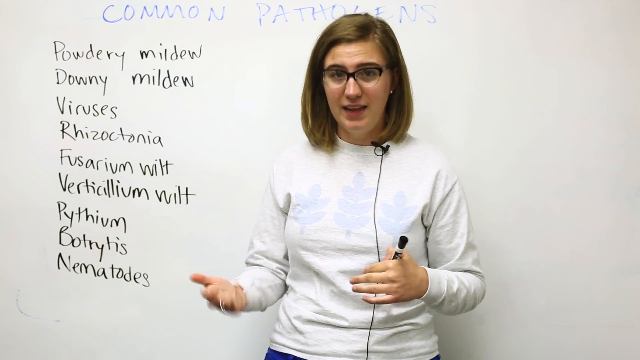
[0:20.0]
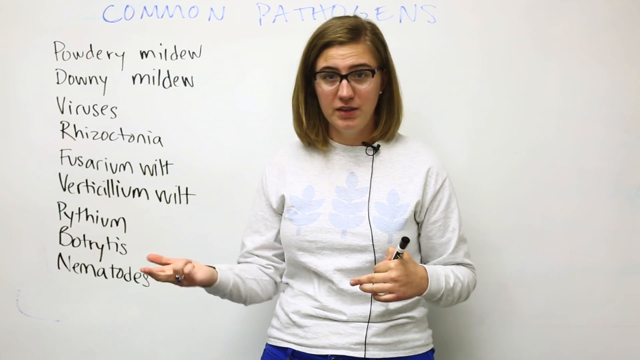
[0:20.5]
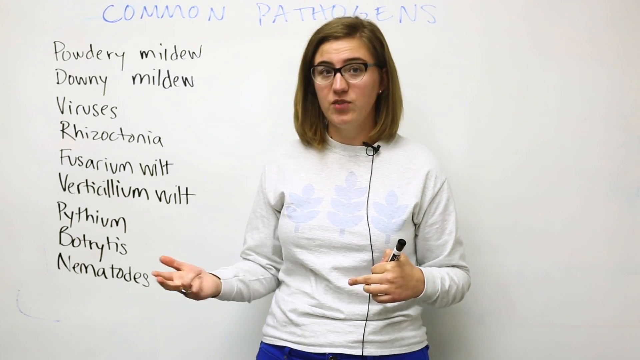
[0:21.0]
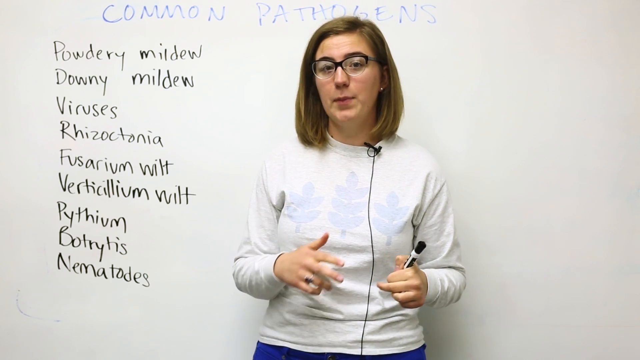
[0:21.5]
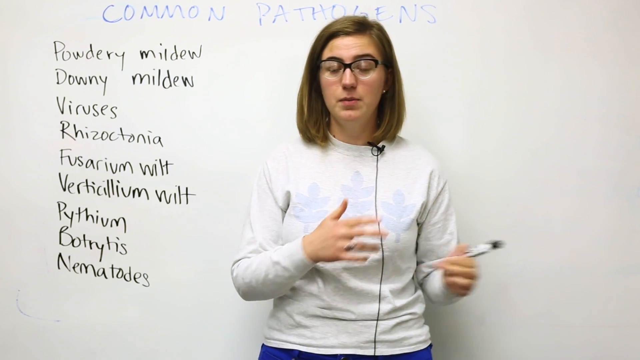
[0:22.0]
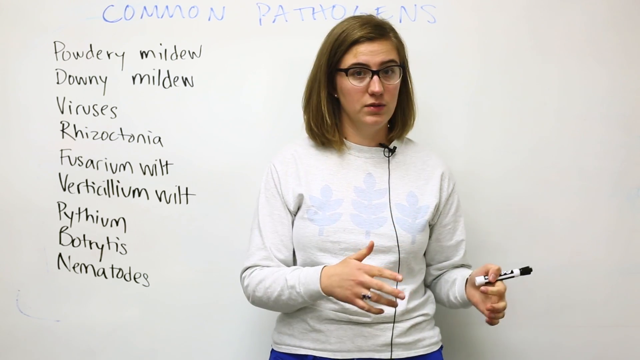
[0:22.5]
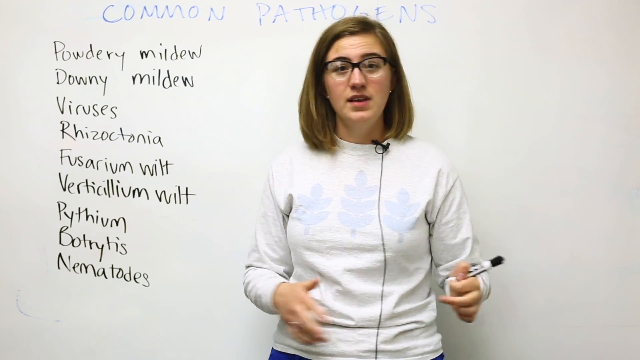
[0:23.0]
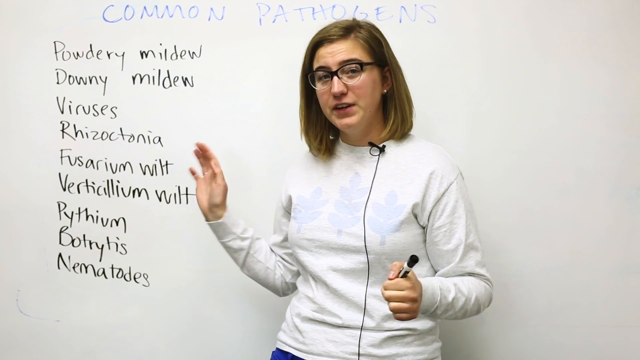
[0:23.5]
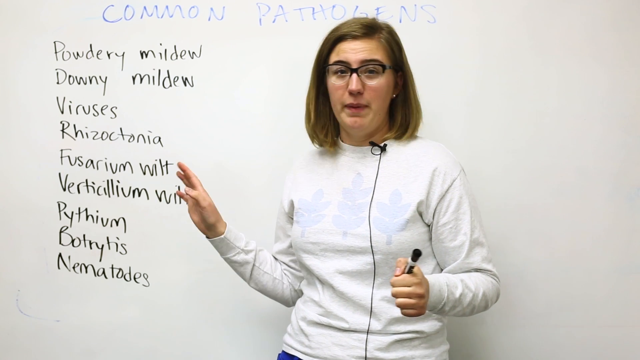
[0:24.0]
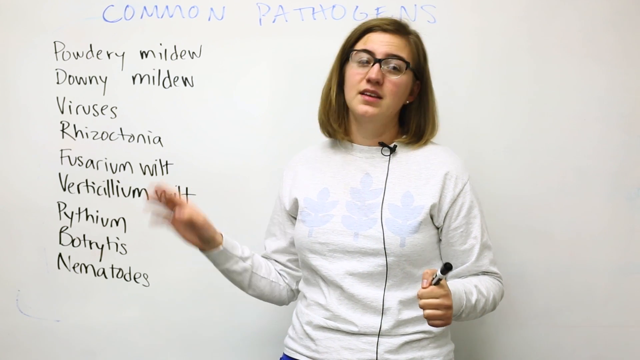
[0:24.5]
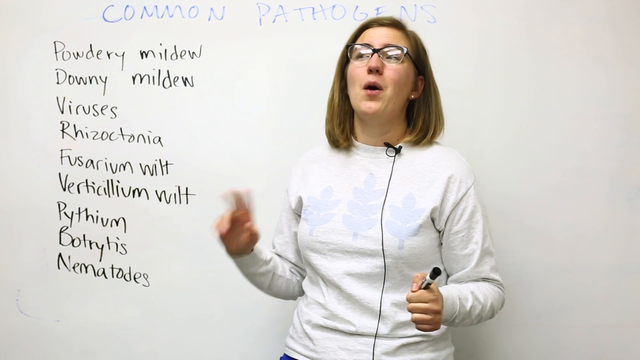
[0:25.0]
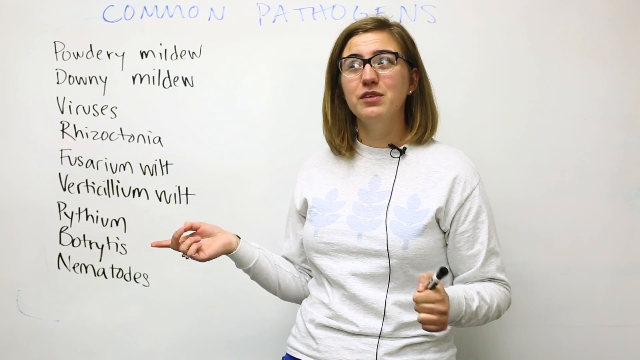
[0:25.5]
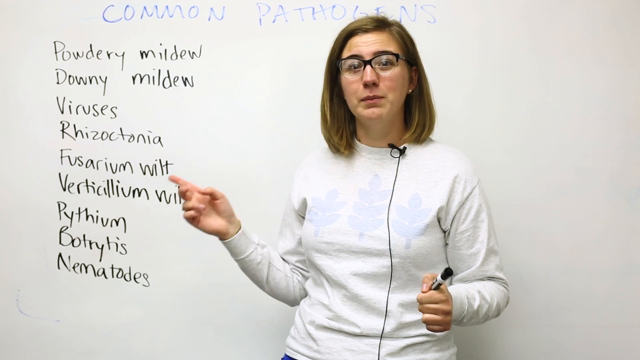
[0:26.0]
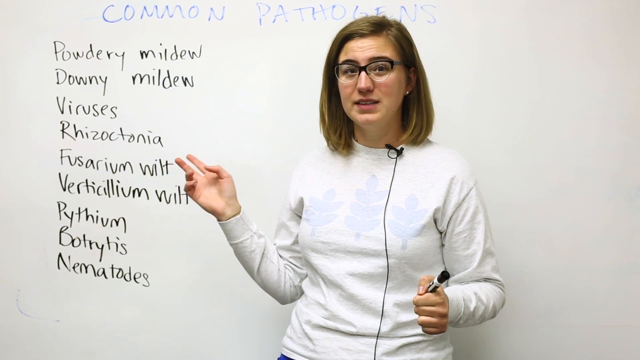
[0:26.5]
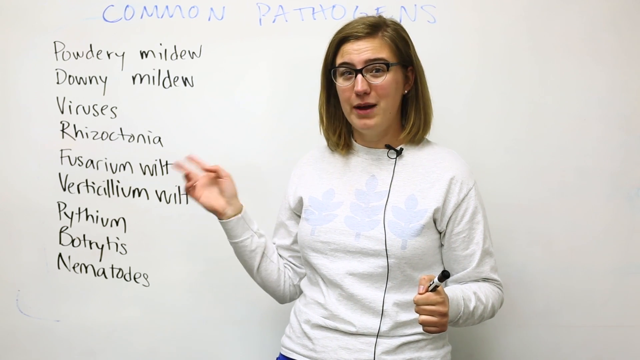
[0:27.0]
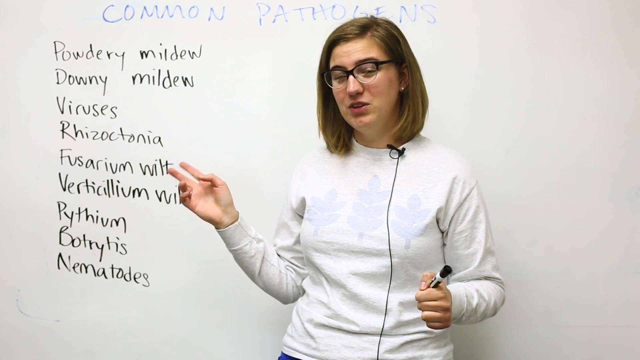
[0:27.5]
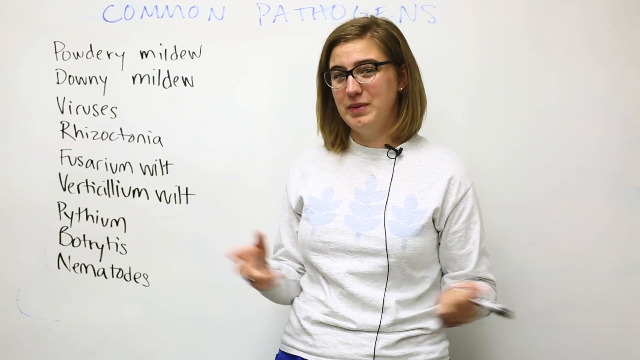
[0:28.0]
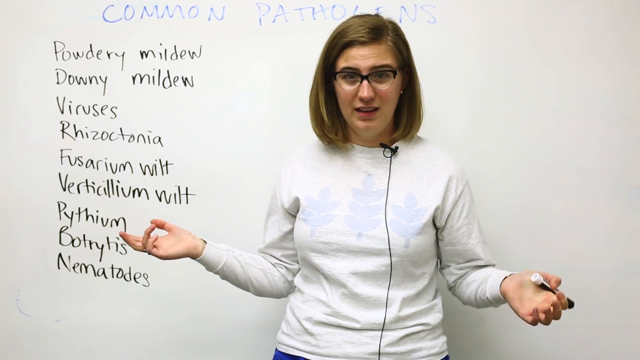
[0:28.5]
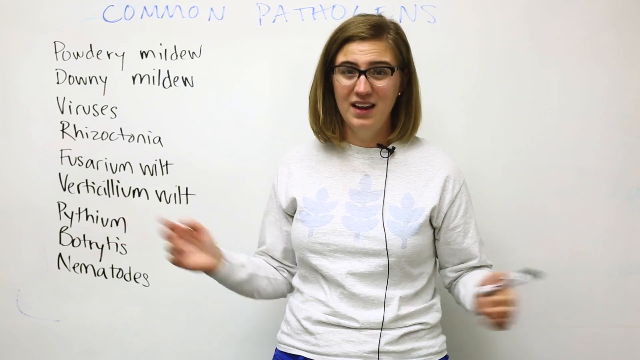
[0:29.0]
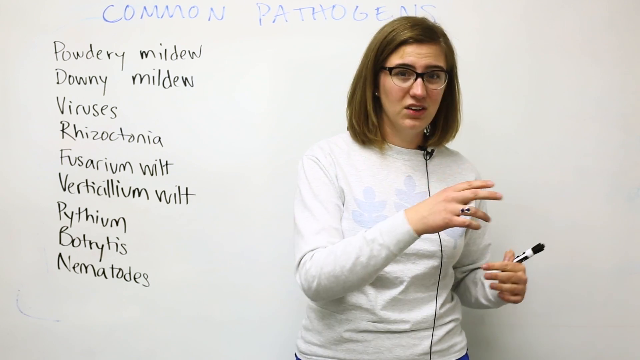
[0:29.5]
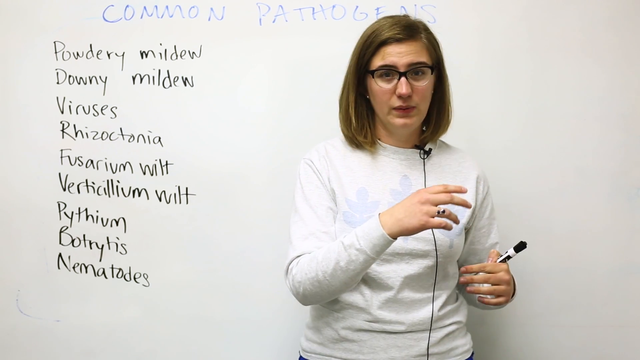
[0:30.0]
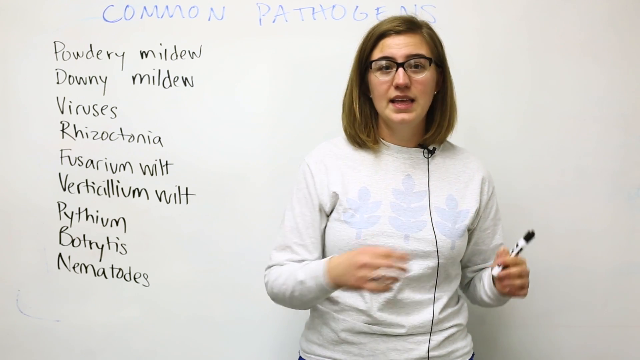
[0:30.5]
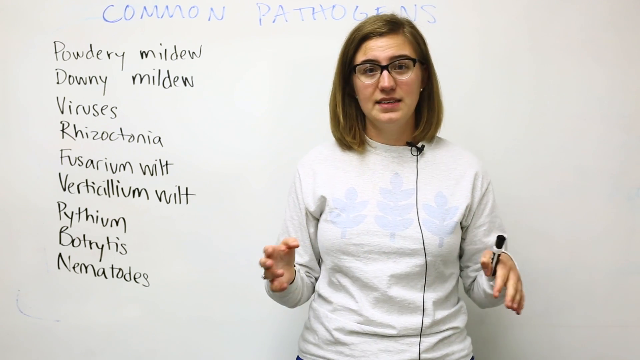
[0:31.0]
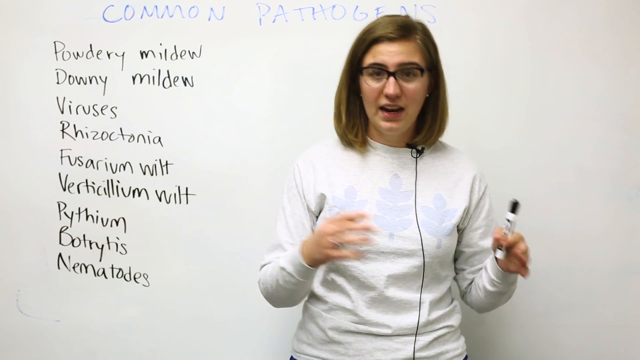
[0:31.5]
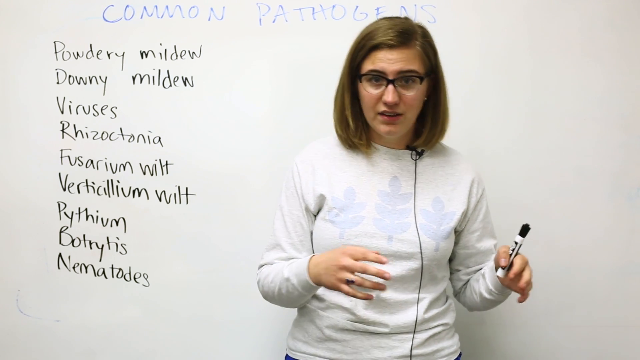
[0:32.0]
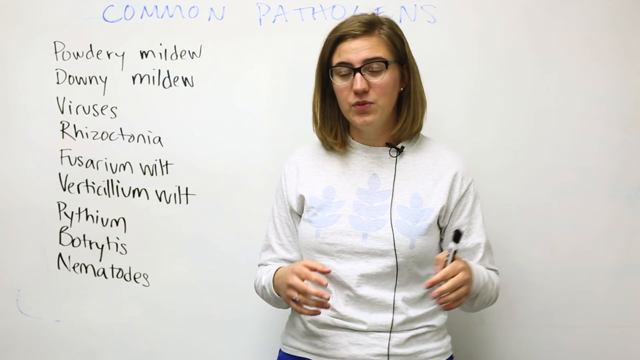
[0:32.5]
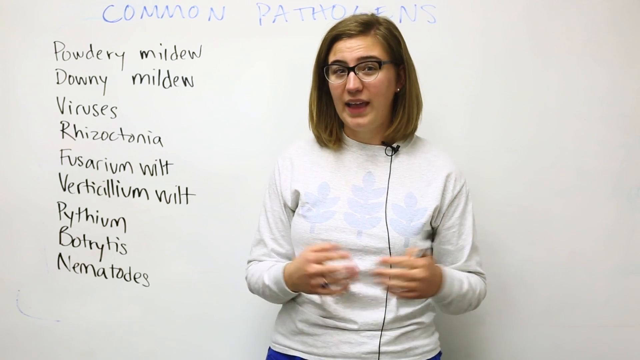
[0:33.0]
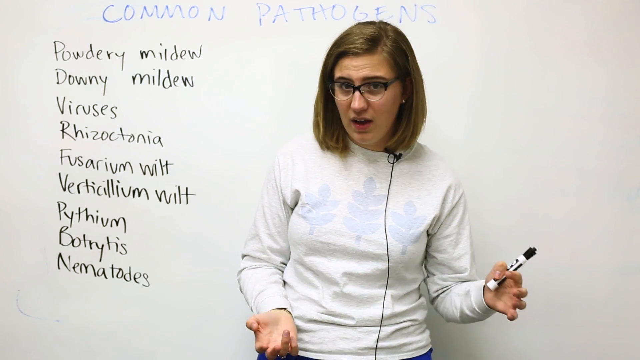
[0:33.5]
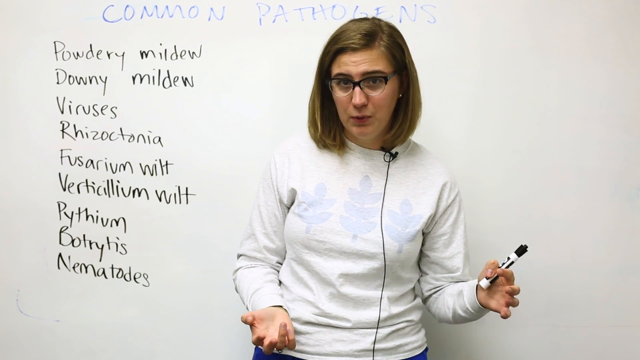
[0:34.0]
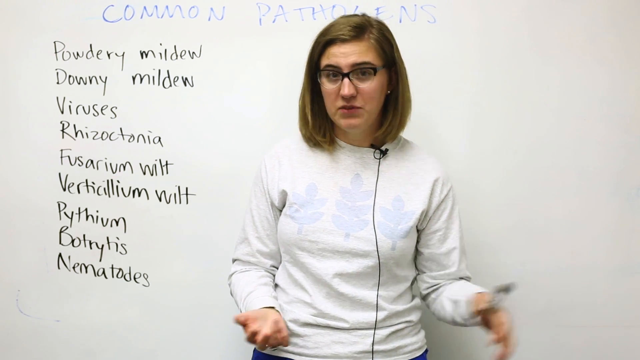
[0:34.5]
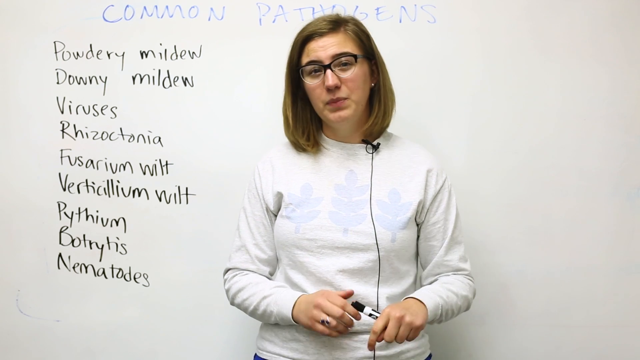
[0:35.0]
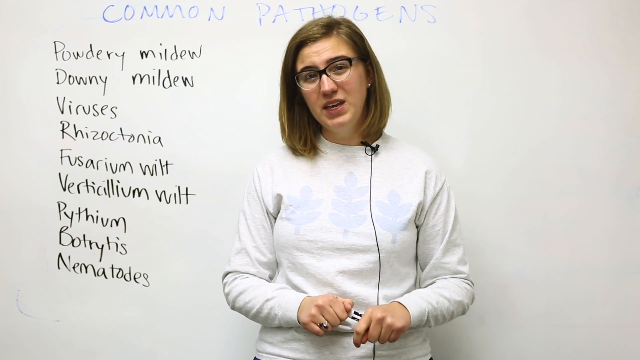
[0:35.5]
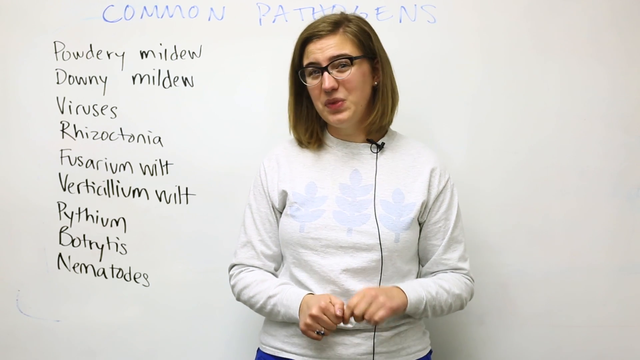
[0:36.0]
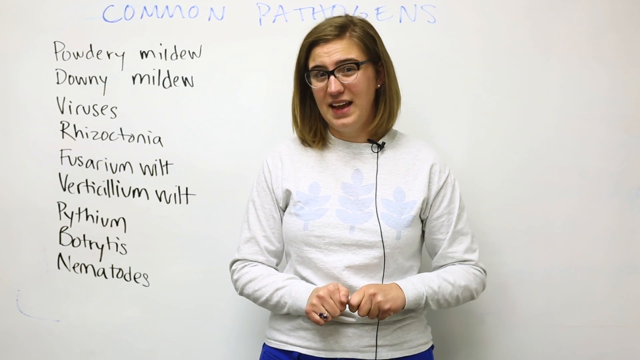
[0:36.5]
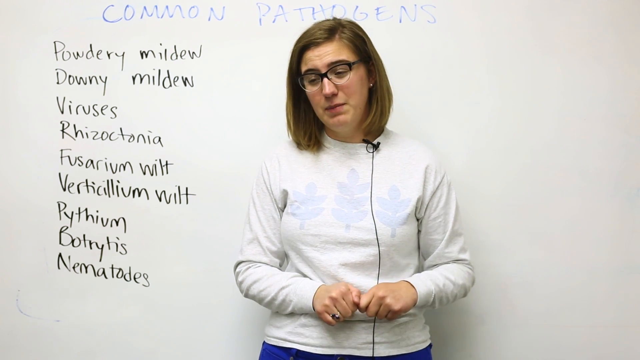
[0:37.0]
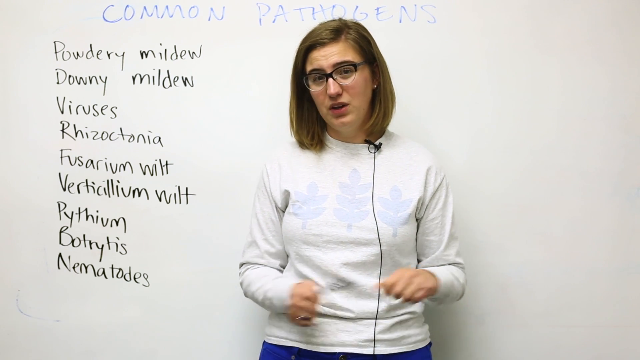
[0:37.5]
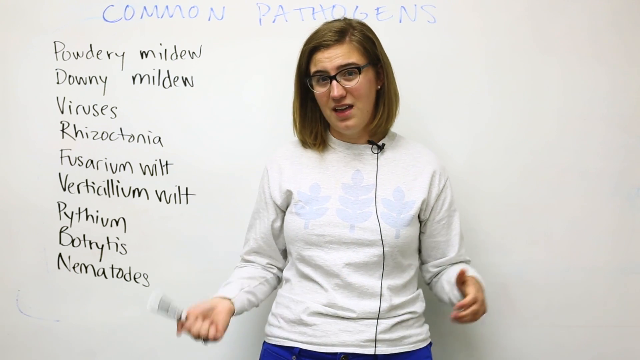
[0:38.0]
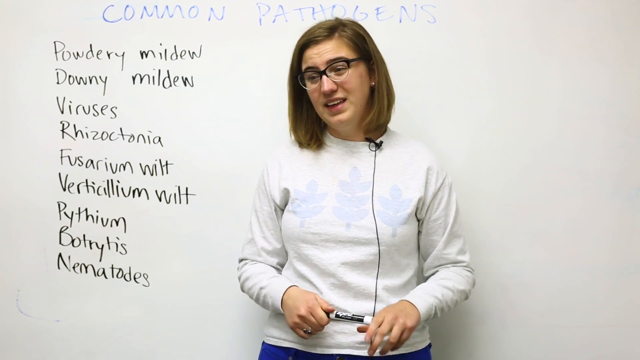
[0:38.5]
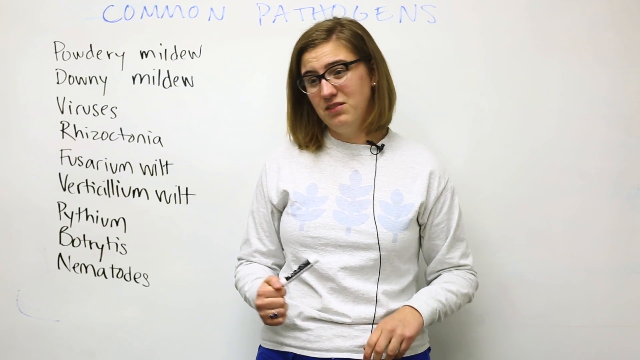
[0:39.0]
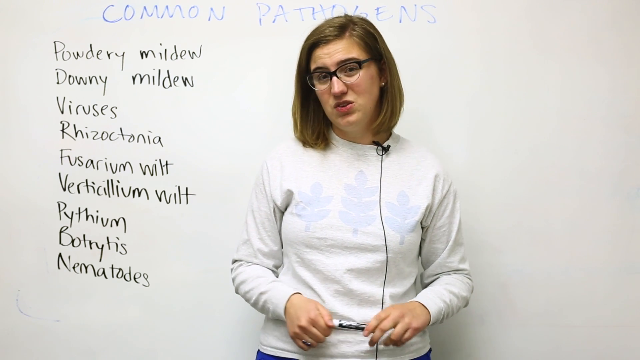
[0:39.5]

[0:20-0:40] A woman talks on camera. She wears a white long-sleeve shirt with a microphone clipped to the collar, and the microphone's cord runs down the front of the shirt. She holds a magic marker and passes it from one hand to the other from time to time as she talks. She moves her hands together and then spreads them farther apart, kind of waves one hand around, gestures toward the whiteboard, and uses her right hand to point to the words written on it. She wears glasses and has medium-length brown hair that reaches her shoulders. The whiteboard with her writing is visible to the left the entire time. At the top, in blue ink, it says "common pathogens", and below that, in black ink, several common pathogens are listed, beginning with "powdery mildew", "downy mildew" and "viruses", followed by several highly technical words.